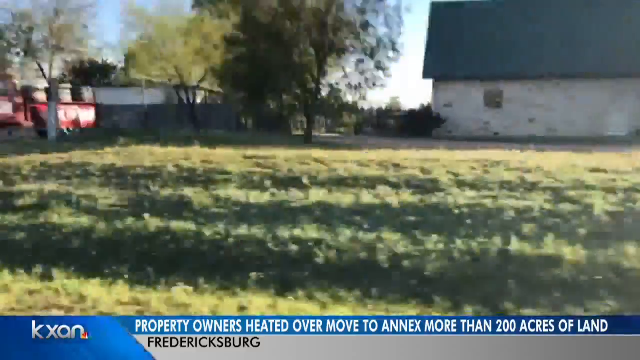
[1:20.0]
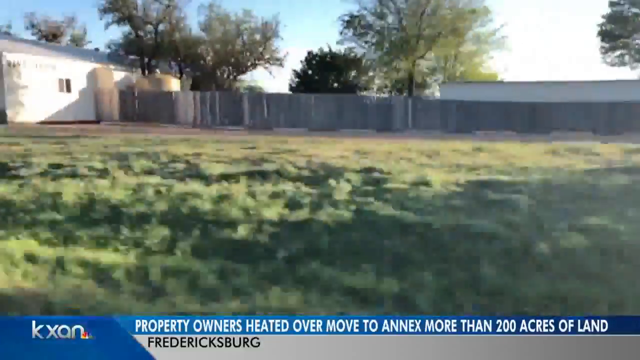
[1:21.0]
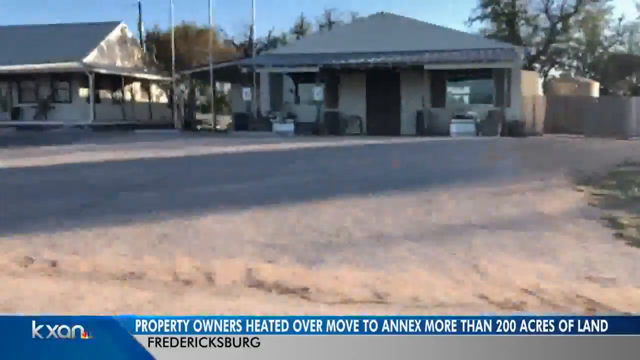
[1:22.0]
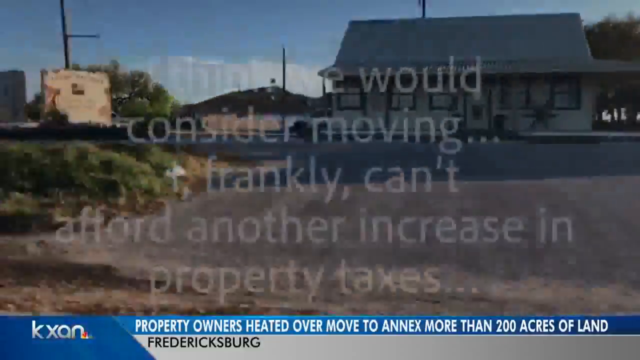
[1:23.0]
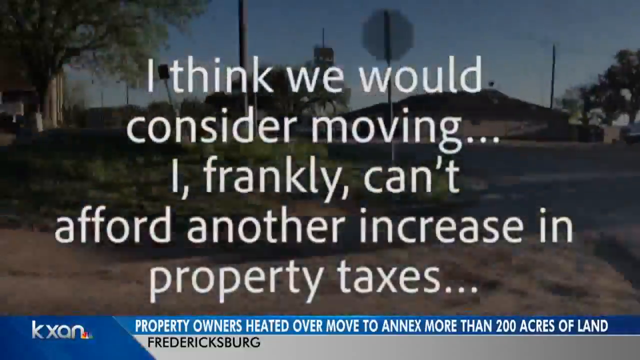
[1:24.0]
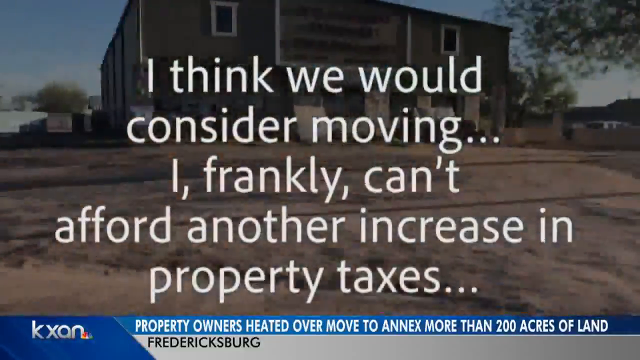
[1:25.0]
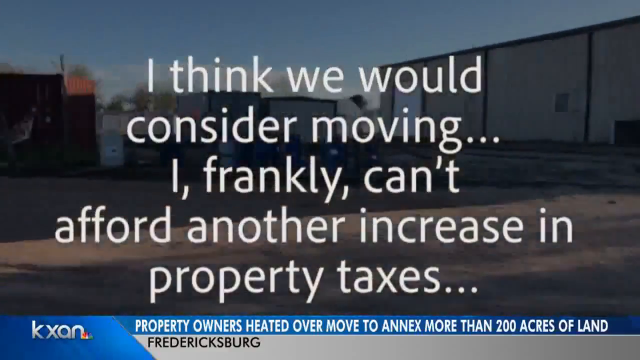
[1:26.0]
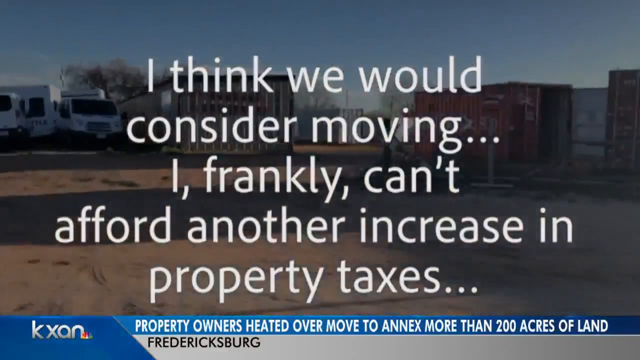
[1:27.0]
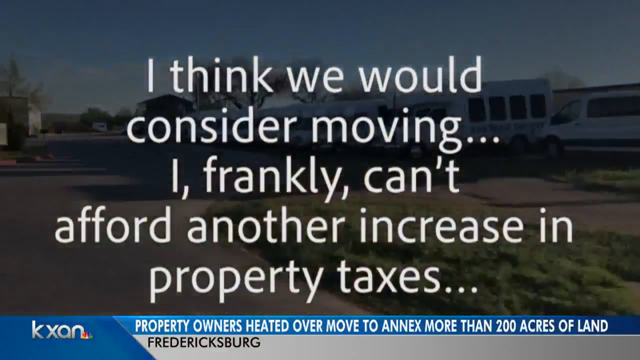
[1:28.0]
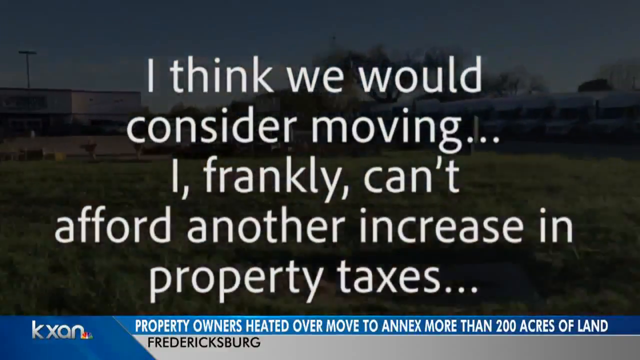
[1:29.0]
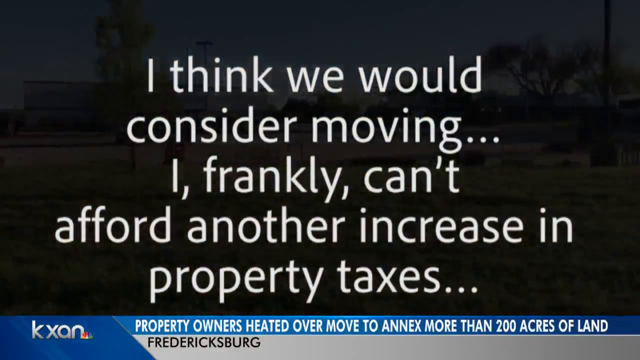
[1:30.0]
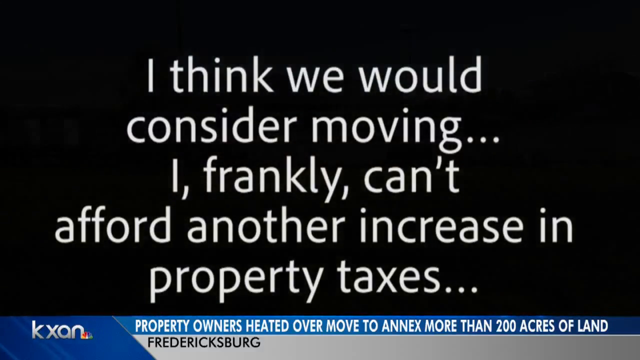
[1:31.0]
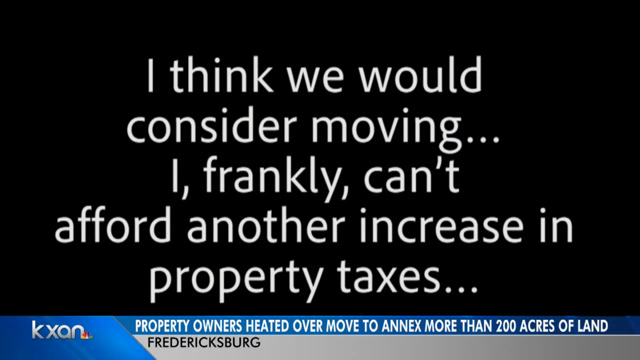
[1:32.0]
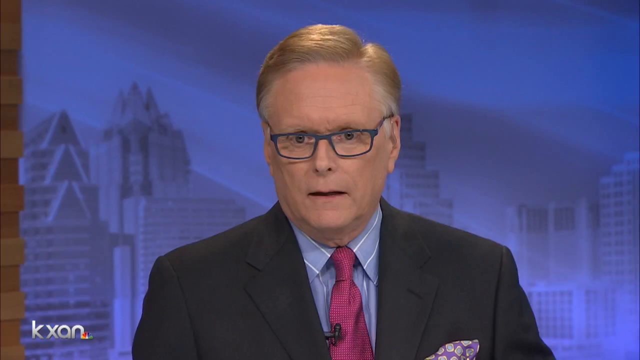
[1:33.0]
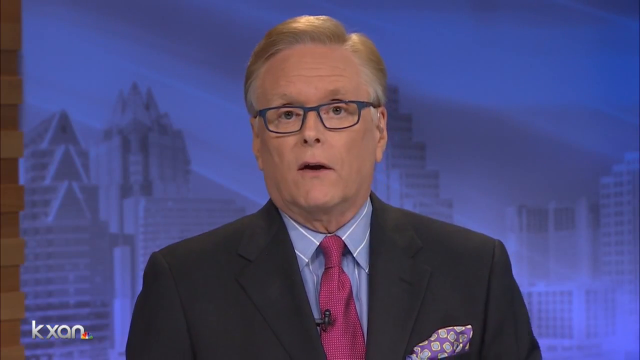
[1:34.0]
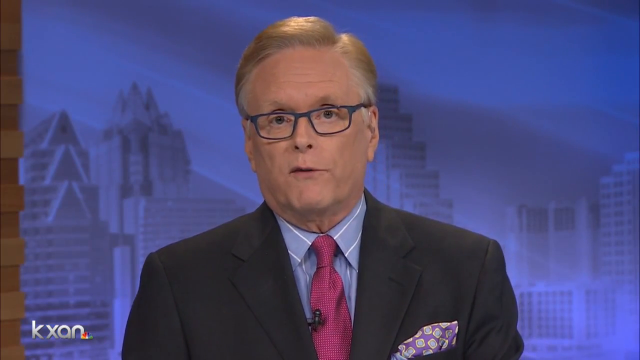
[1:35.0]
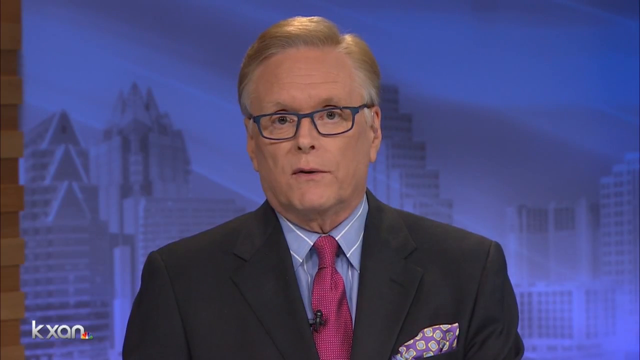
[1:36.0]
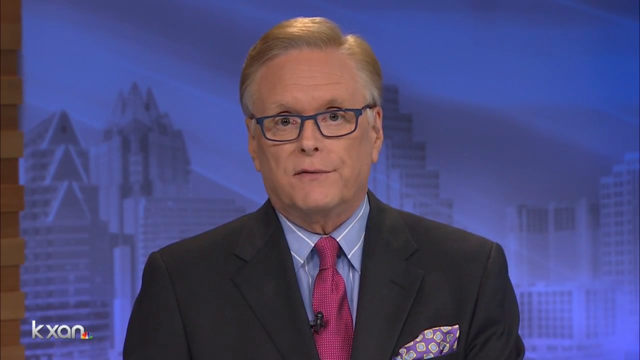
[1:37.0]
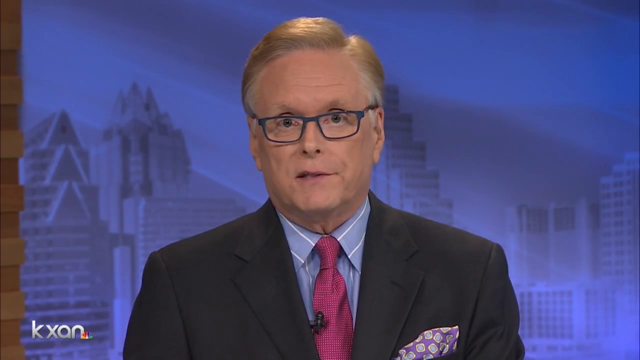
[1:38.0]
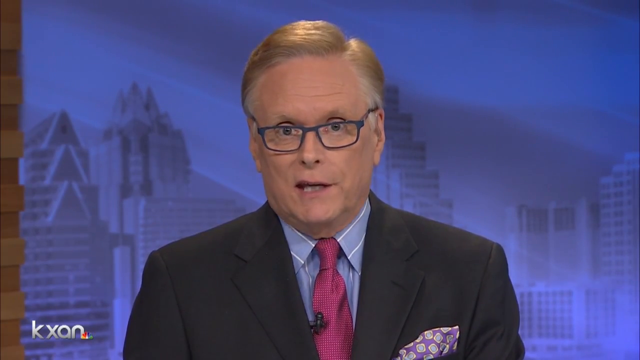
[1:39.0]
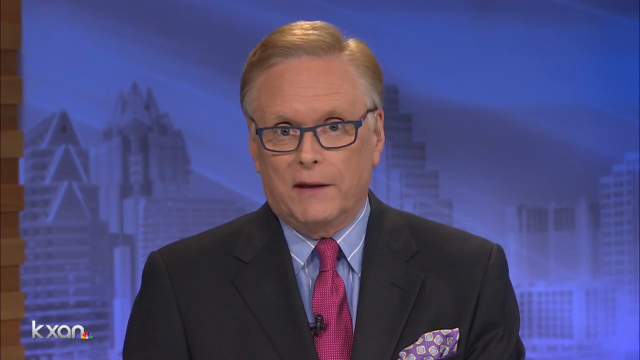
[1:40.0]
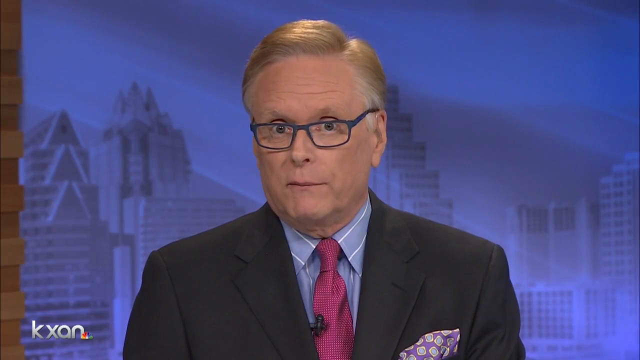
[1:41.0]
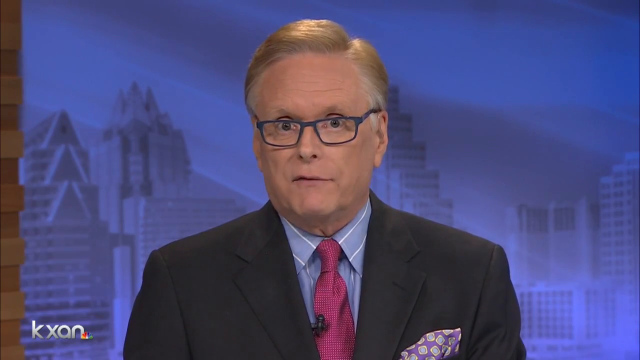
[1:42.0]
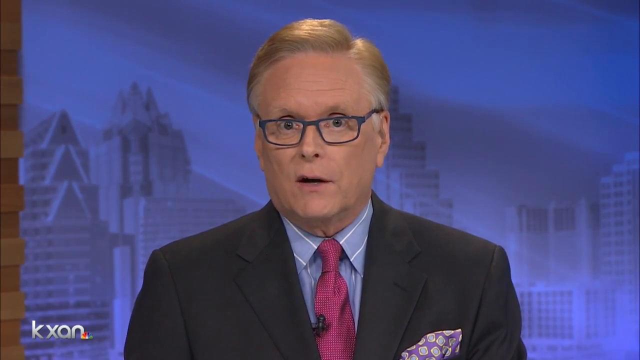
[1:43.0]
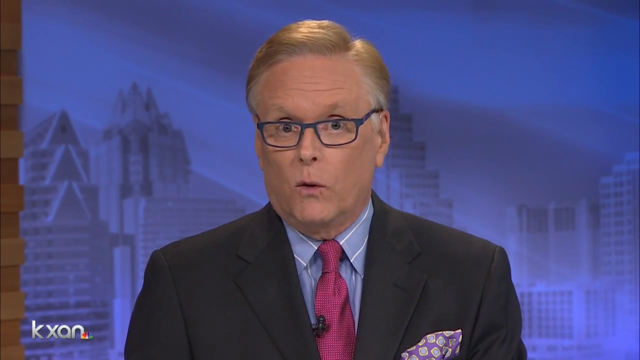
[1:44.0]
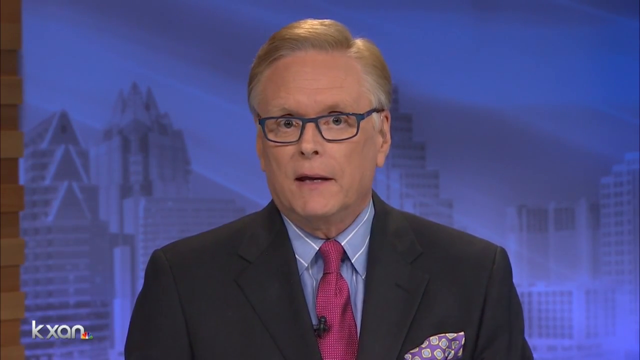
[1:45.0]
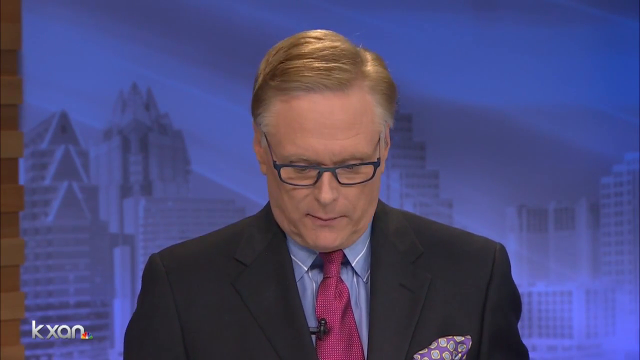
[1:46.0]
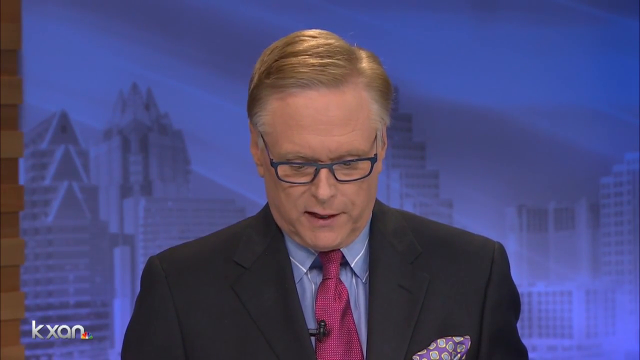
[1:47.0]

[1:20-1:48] The drive continues past grass, large trees, buildings, and houses, including older houses and small one-story places. White text in the middle of the screen reads "I think we would consider moving. I frankly can't afford another increase in property taxes." Text at the bottom reads "property owners heated over move to annex more than 200 acres of land to Fredericksburg." While the quote stays on screen, houses pass in the background from the moving car. The screen turns black and cuts to the TV anchor, who wears dark-rimmed glasses, a black jacket, a blue dress shirt and a red tie. Behind him is a blue background with silhouettes of buildings and clouds as he talks to the camera.